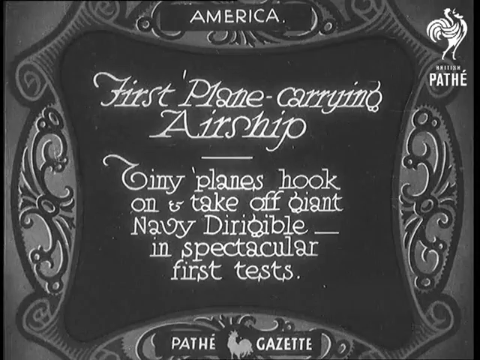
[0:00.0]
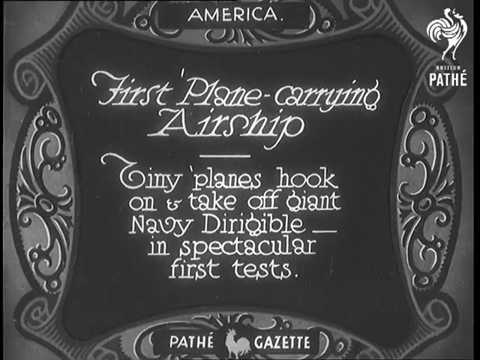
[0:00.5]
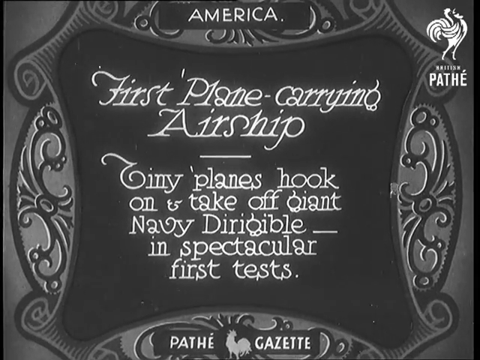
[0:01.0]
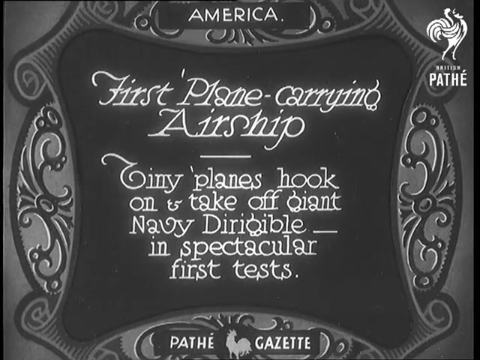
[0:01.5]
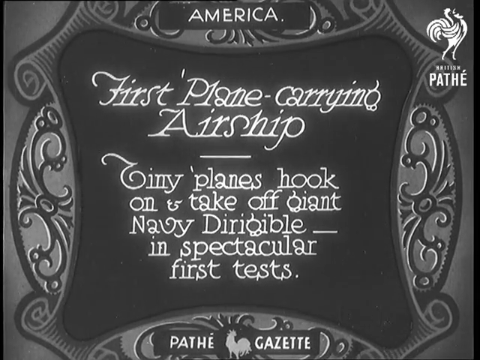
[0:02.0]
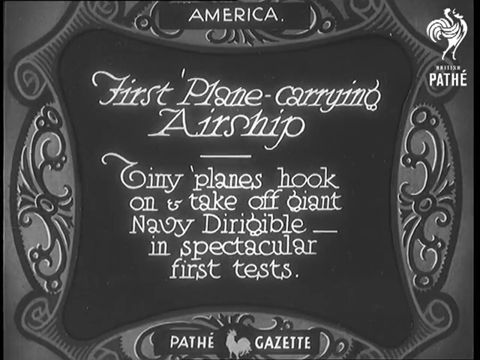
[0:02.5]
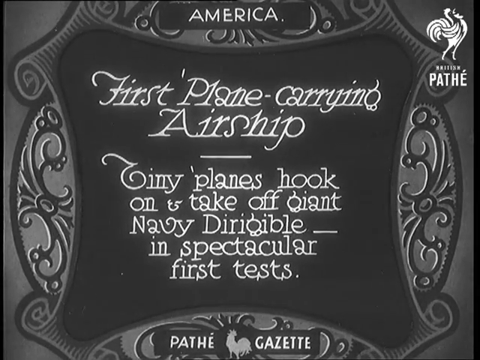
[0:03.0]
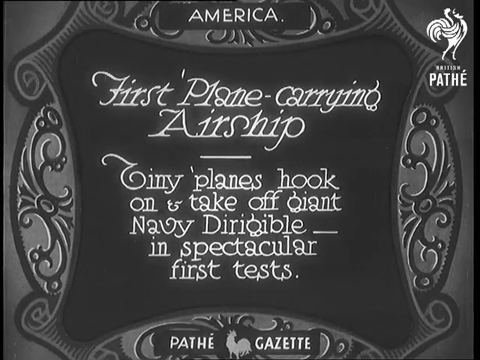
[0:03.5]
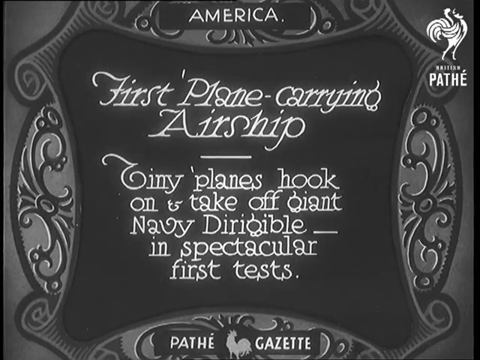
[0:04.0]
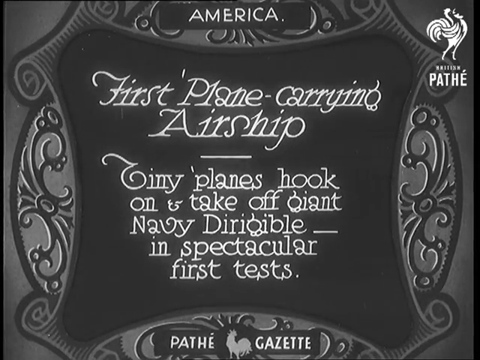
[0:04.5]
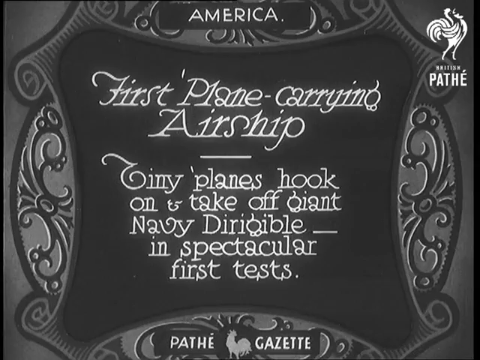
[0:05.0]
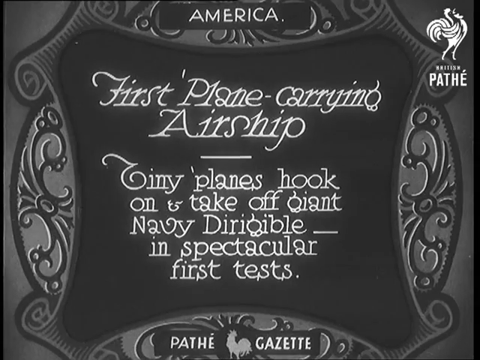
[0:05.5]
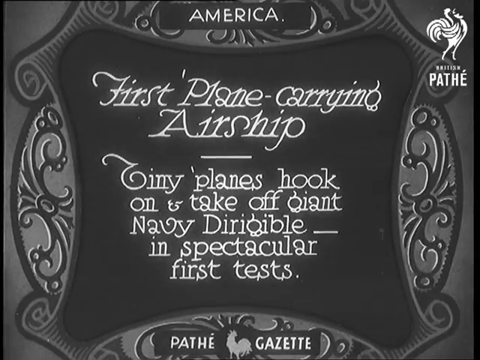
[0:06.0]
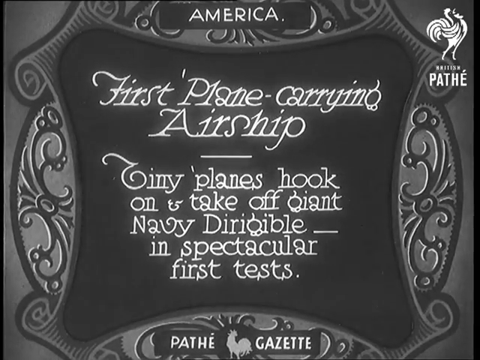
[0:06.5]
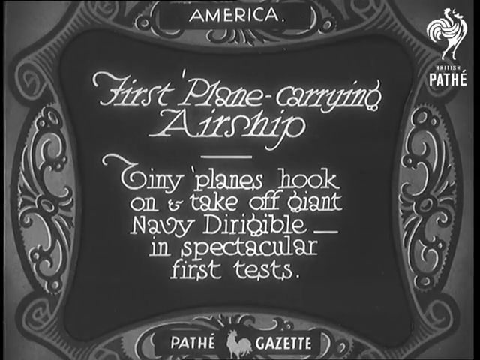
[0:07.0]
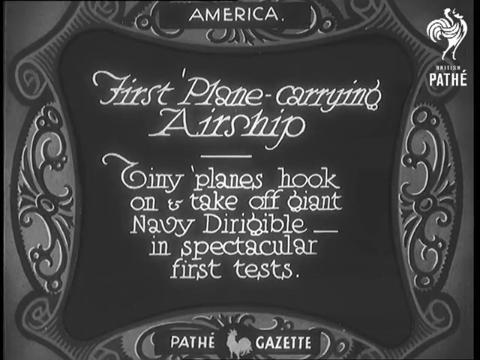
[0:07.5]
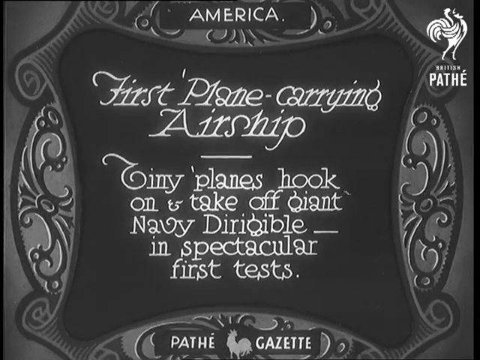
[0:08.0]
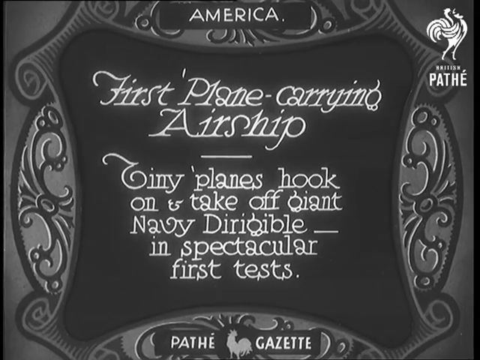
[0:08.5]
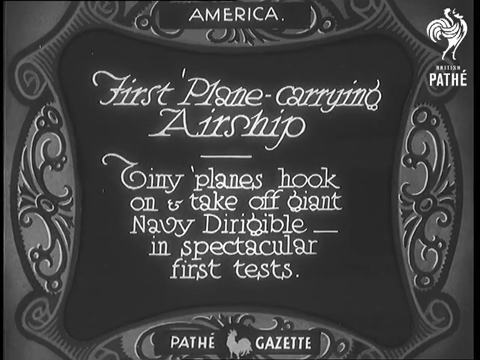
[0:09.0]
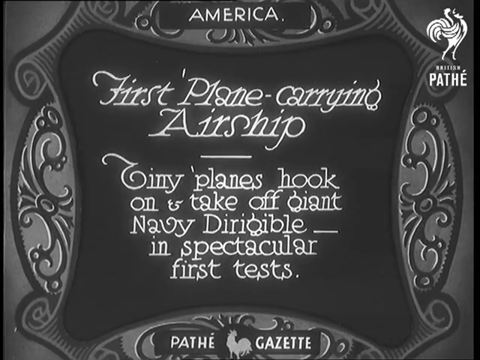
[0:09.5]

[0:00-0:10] The video opens on an old-fashioned title page. Its text mentions an airship, tiny planes that hook on and take off, and the Navy, and includes the words "in a spectacular first test". The font is an older style that is hard to read; some letters, such as the G's and Q's, look different and have to be made out from context.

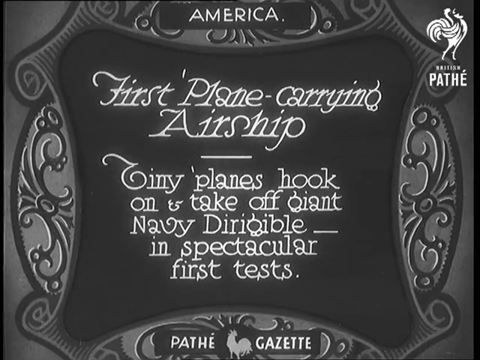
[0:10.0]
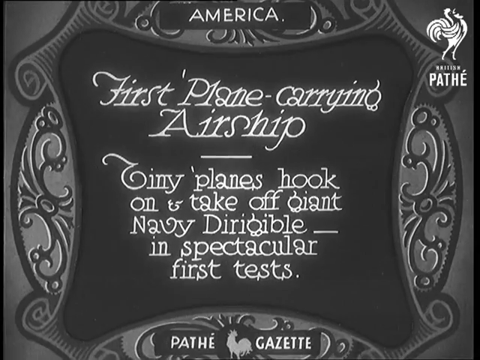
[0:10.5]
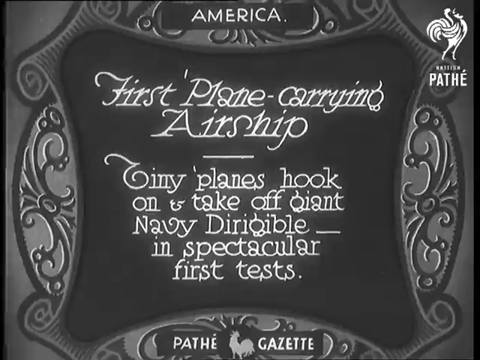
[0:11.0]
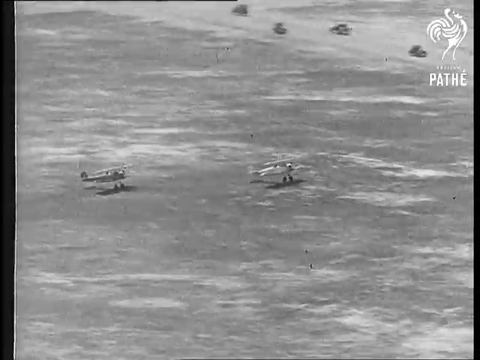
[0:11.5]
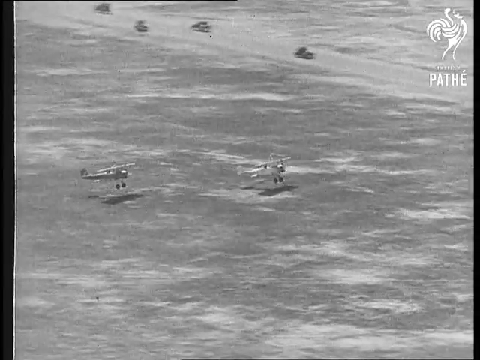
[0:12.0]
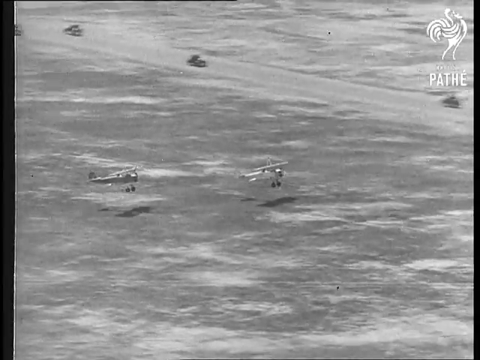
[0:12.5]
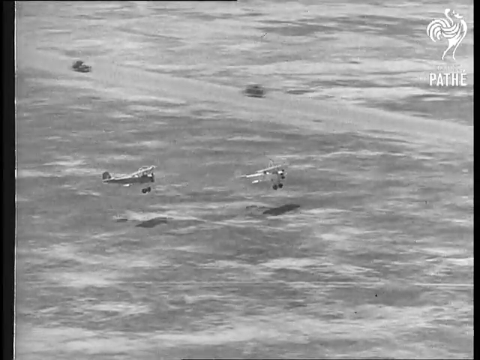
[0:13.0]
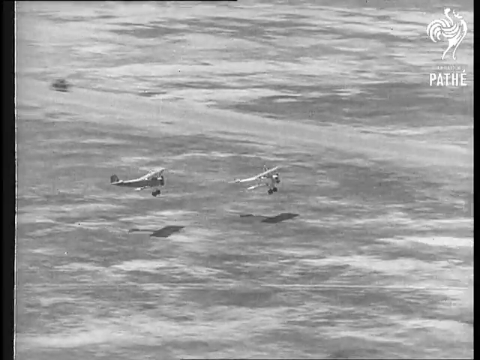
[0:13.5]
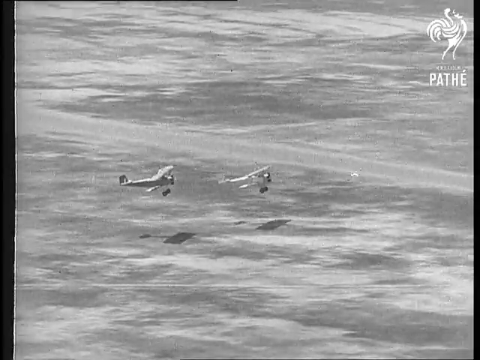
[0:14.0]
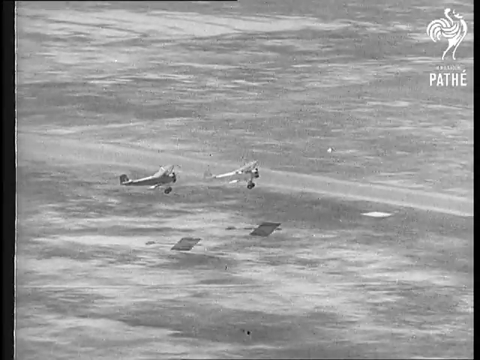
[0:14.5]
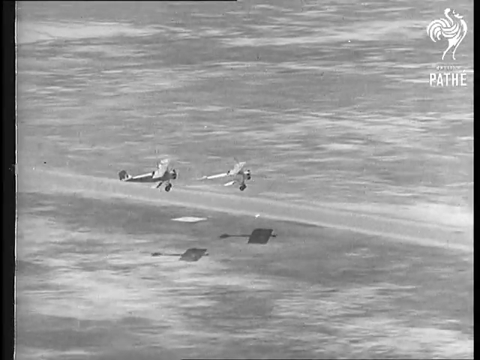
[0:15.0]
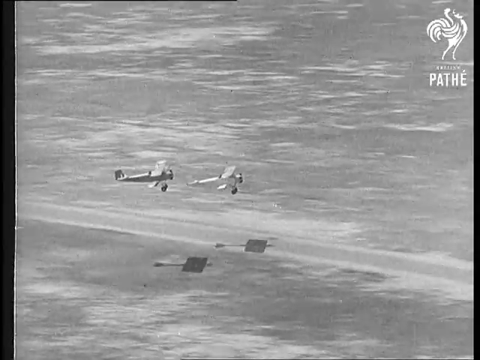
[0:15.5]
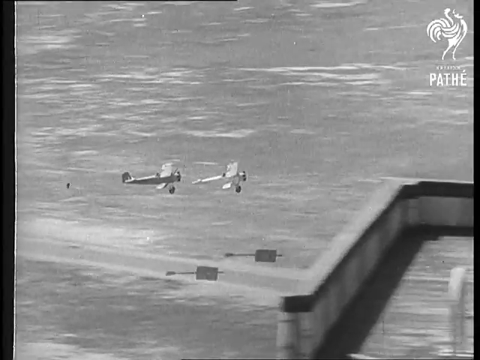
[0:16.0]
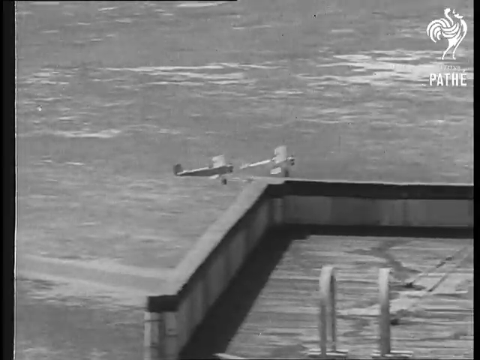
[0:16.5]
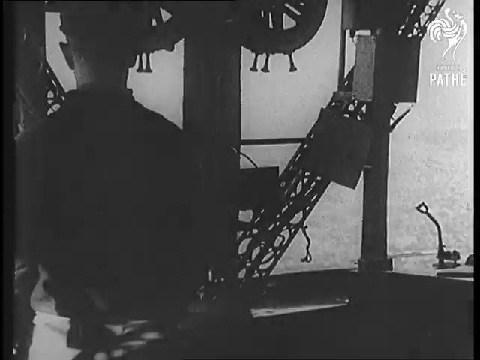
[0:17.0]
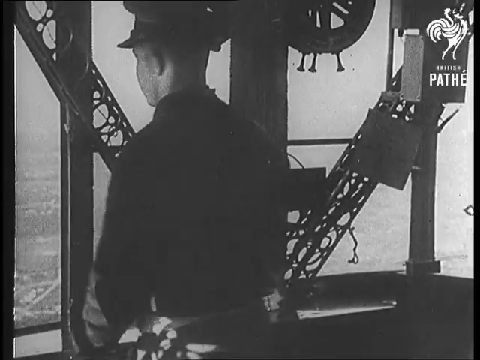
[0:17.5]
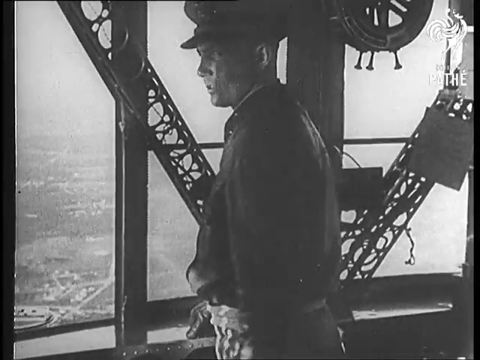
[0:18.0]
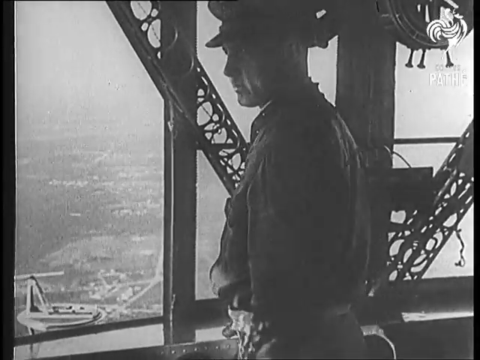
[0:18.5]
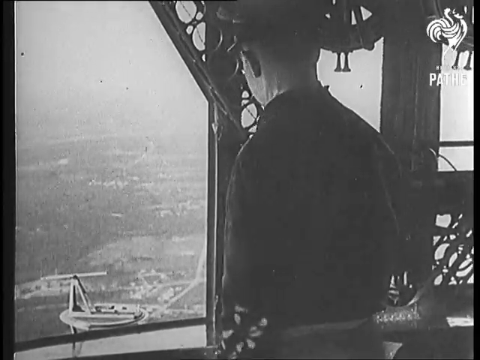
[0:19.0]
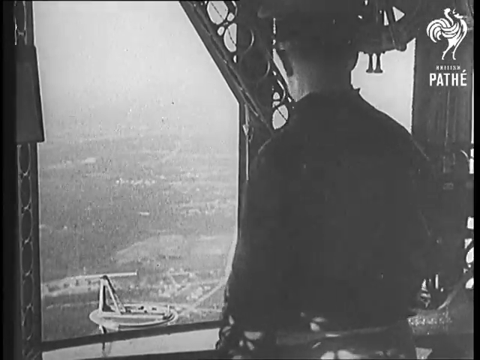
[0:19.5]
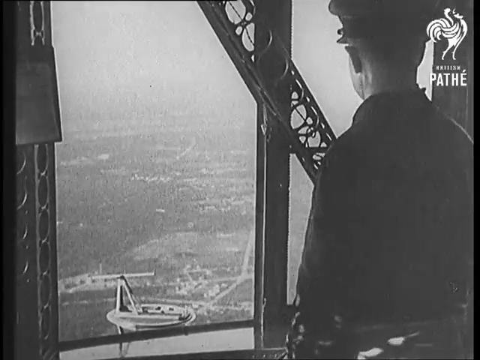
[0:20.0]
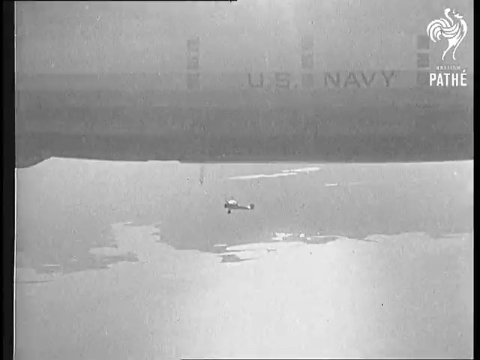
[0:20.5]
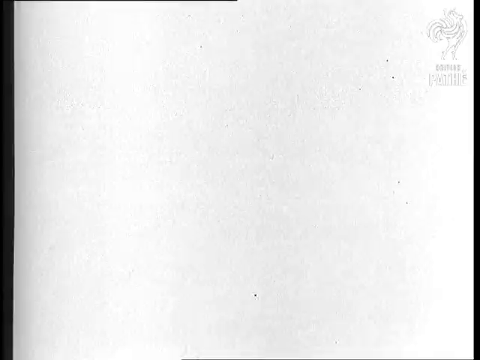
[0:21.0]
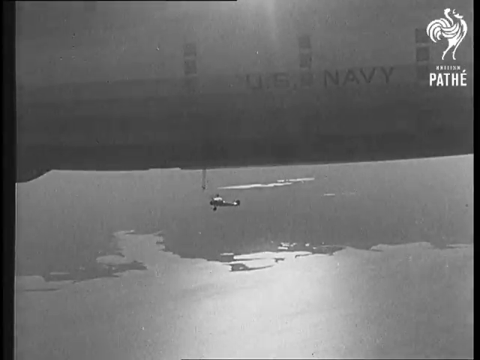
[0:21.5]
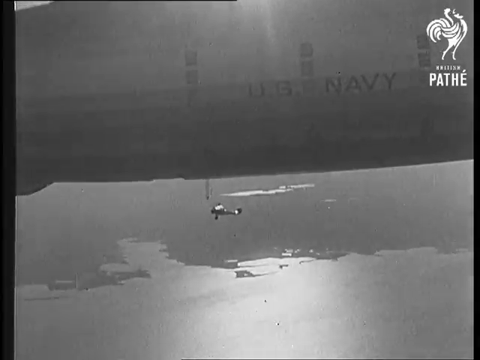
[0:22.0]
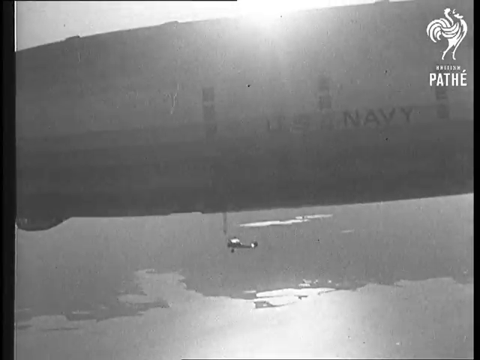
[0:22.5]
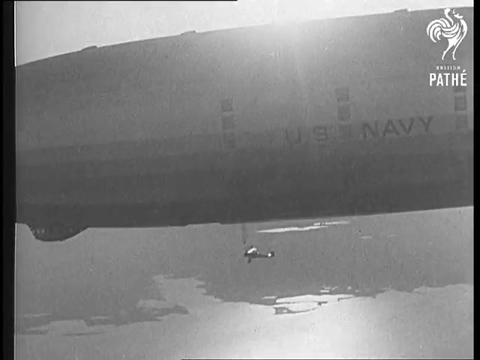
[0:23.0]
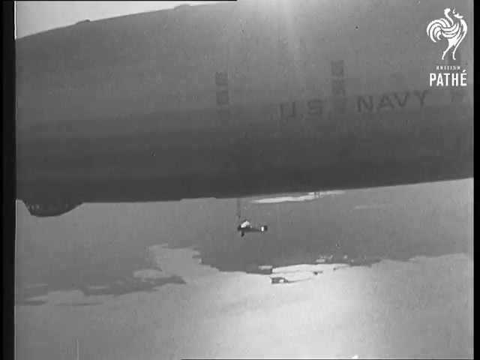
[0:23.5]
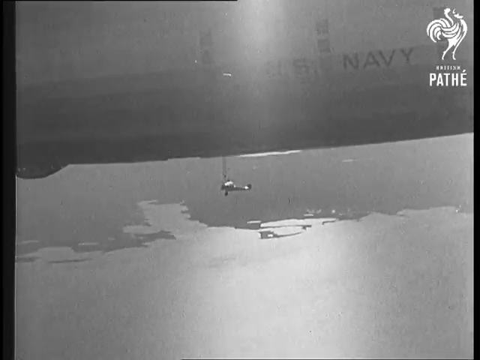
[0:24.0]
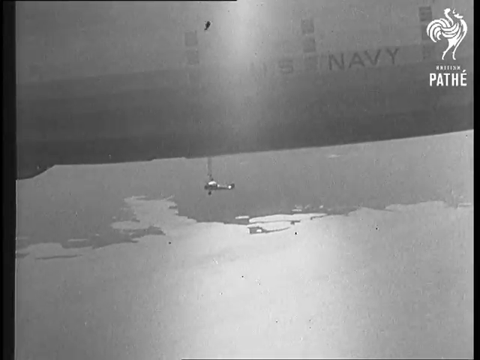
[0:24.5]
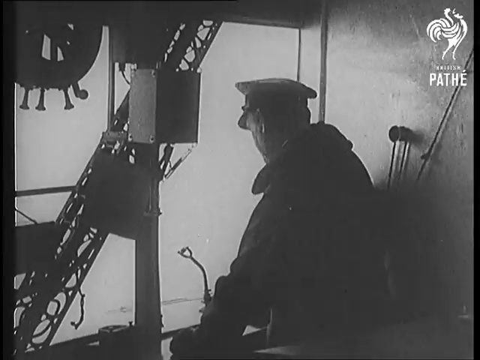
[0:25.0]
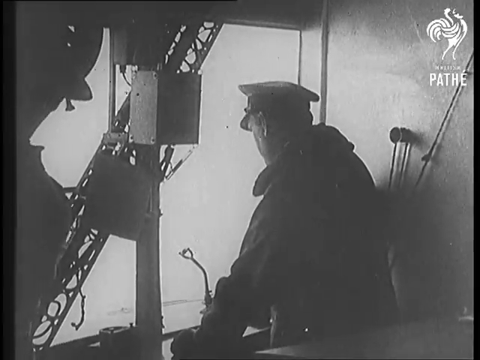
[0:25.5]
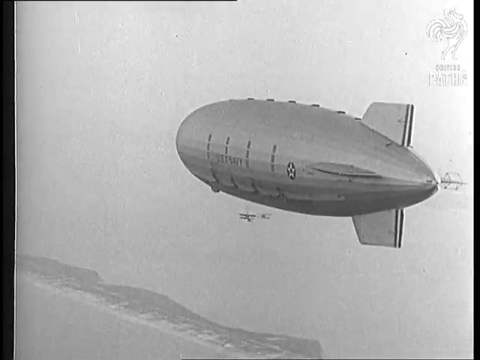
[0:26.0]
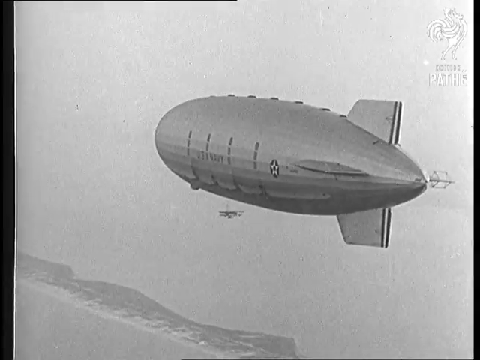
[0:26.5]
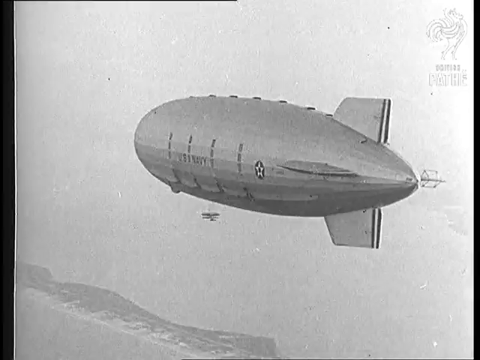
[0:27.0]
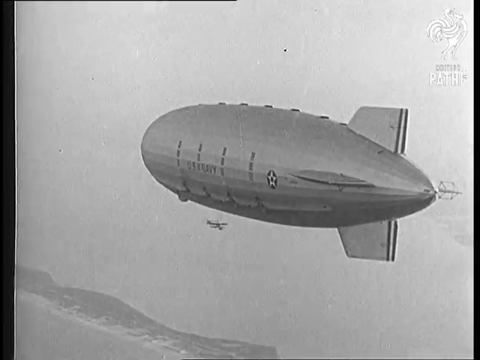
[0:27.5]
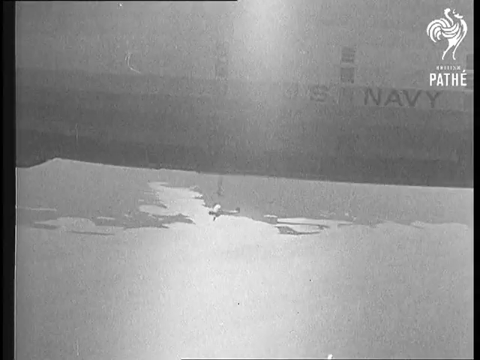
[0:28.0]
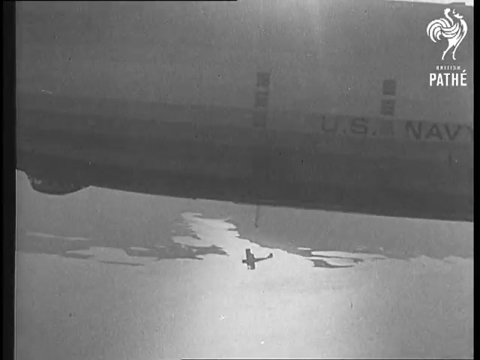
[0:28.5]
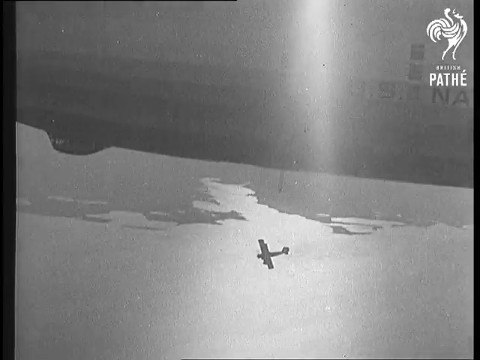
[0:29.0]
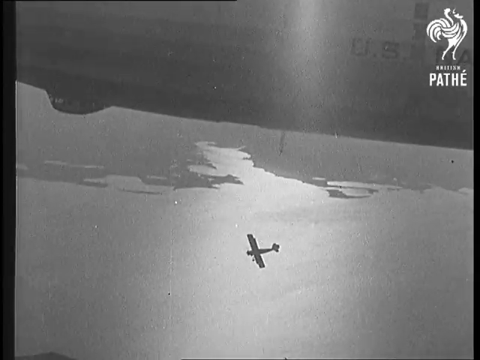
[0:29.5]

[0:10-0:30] The title page is shown, then the video cuts to airplanes taking off from the ground, apparently in a field. The planes take off side by side and fly over the area. A person who looks like they are in a watchtower, wearing a hat, looks over the scene. The view then switches to footage from one plane, apparently with a camera on it, showing the other plane below, with one of its wings visible; the two fly side by side. A hot air balloon blimp flies nearby with the plane near it, and the plane looks tiny next to the huge blimp. The footage is black and white, and open water is possibly visible below the plane and the blimp as they fly.